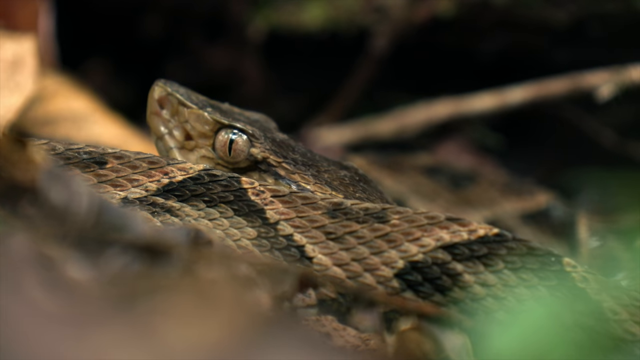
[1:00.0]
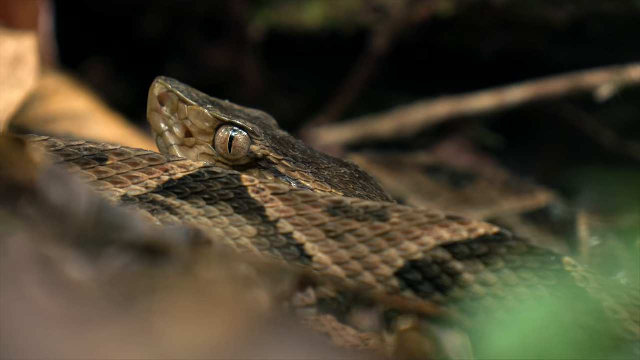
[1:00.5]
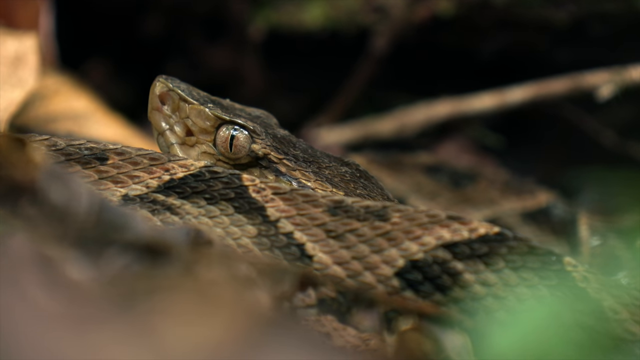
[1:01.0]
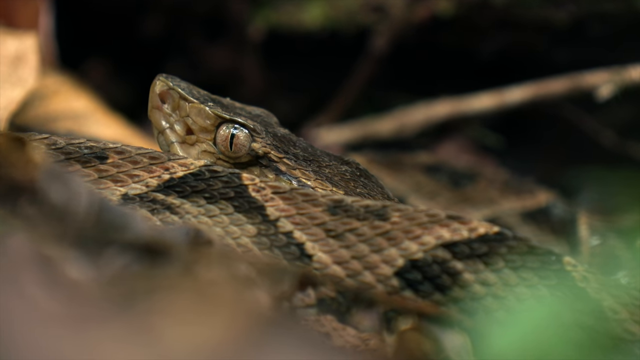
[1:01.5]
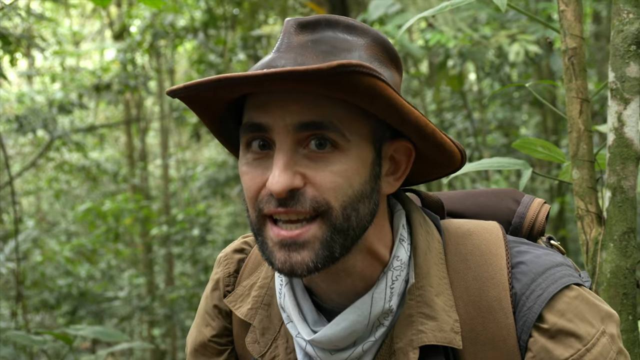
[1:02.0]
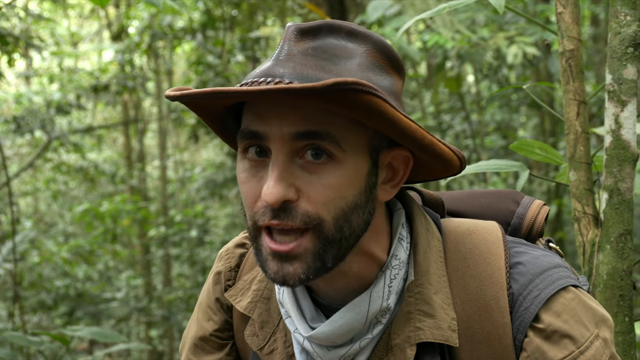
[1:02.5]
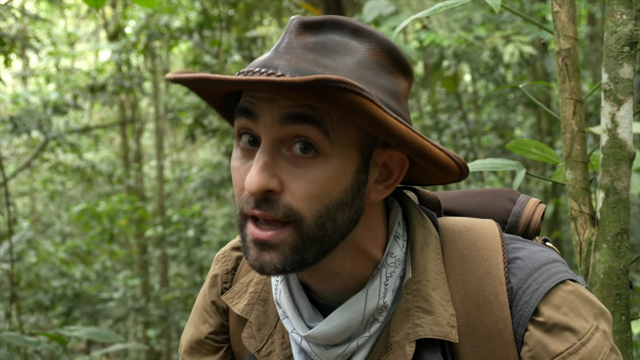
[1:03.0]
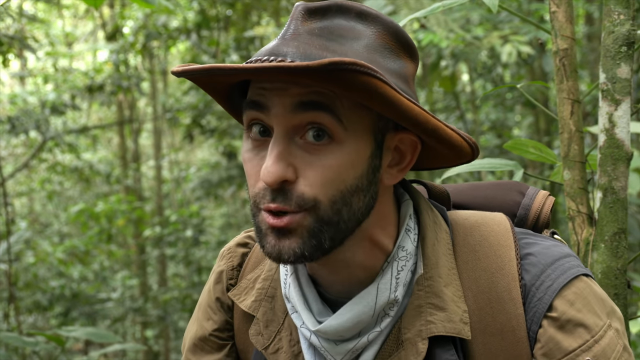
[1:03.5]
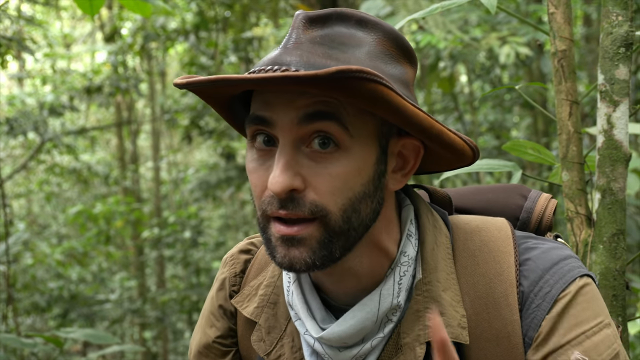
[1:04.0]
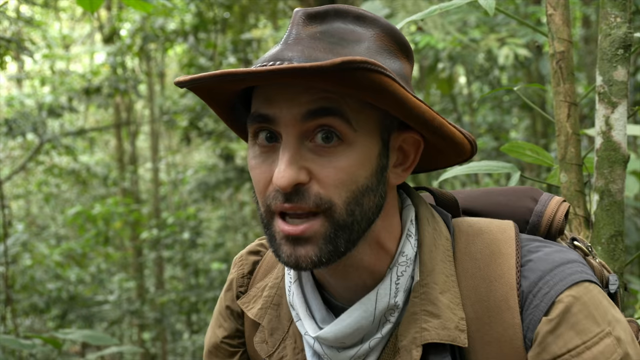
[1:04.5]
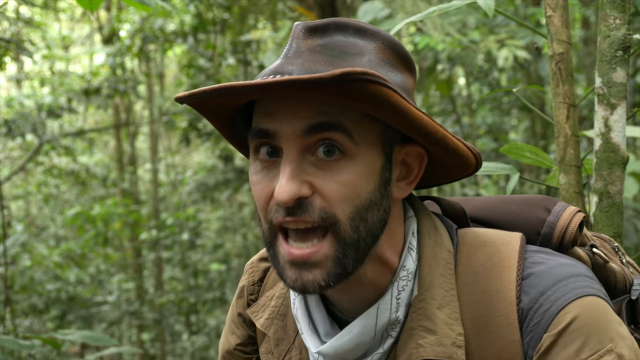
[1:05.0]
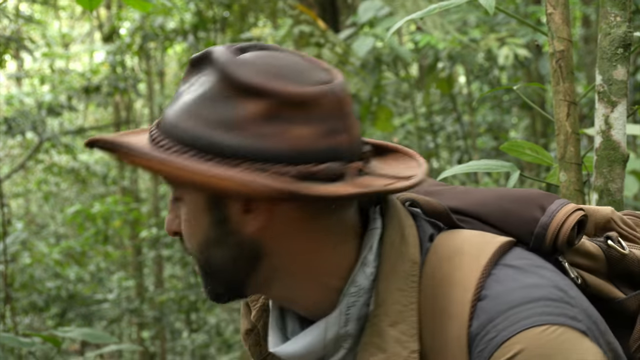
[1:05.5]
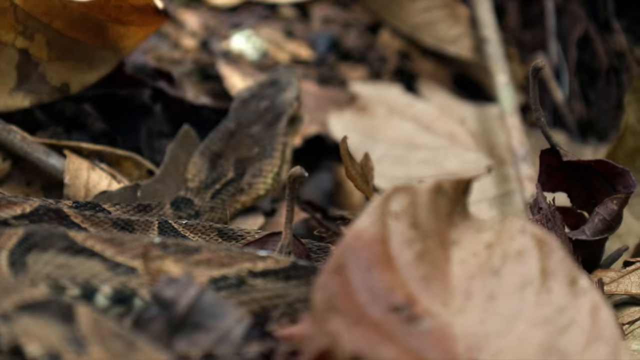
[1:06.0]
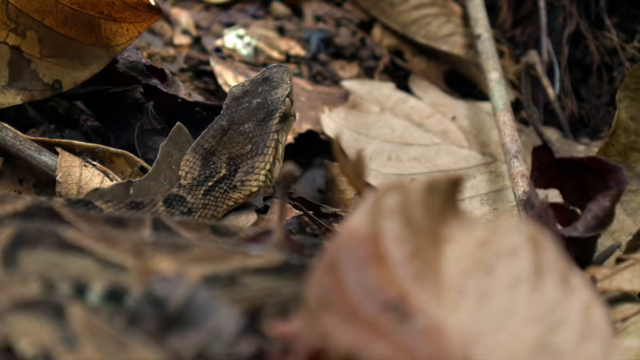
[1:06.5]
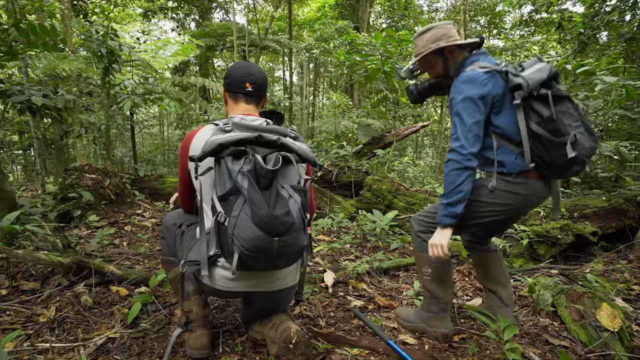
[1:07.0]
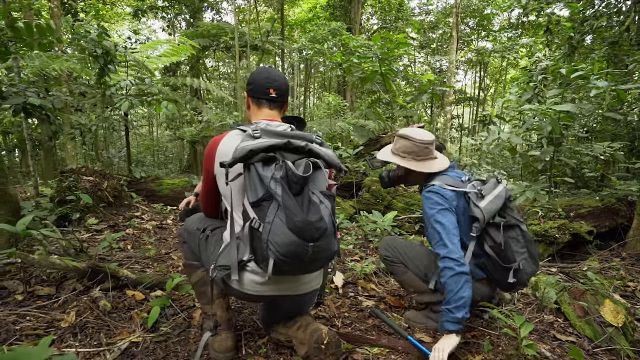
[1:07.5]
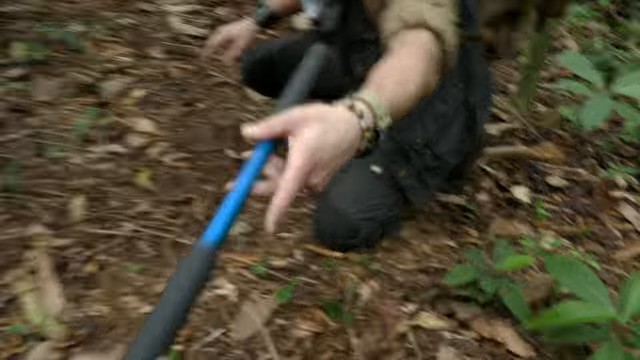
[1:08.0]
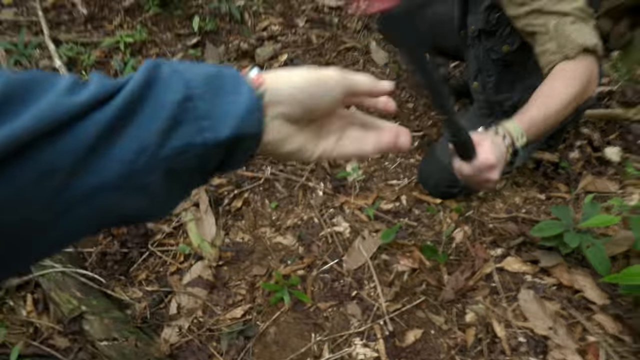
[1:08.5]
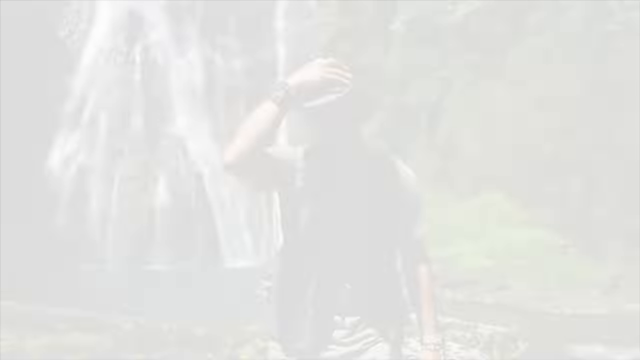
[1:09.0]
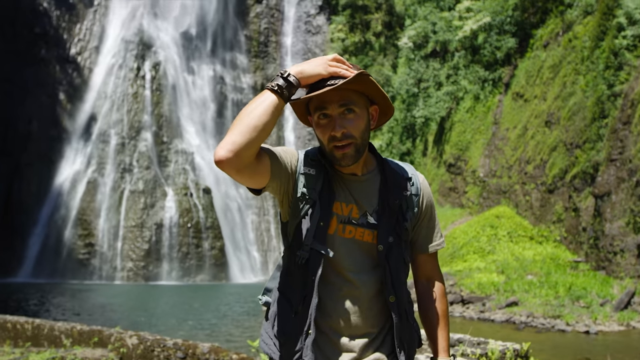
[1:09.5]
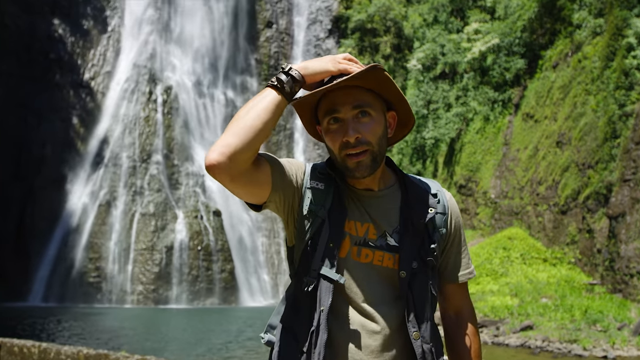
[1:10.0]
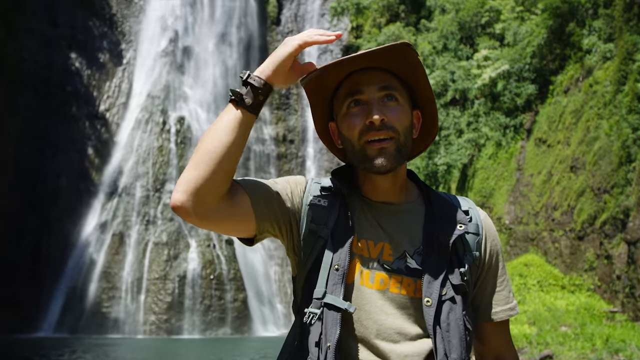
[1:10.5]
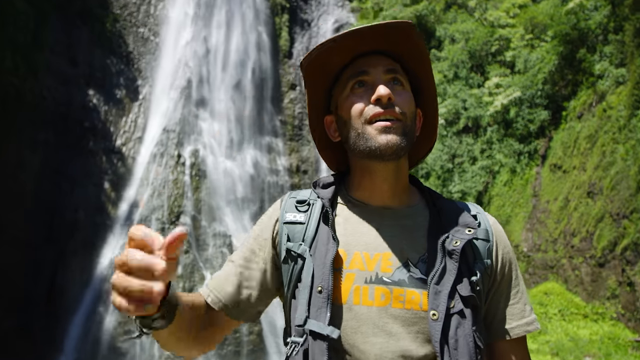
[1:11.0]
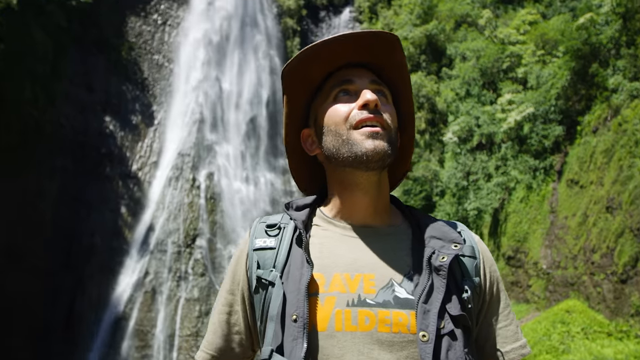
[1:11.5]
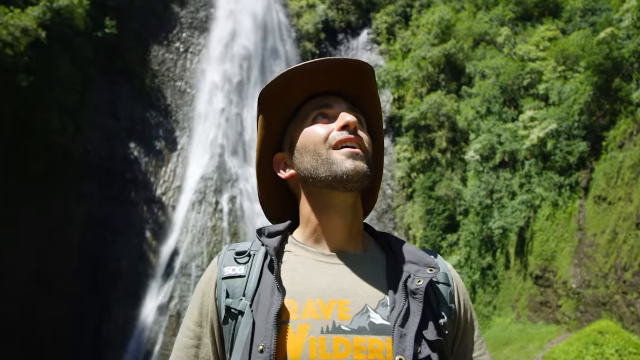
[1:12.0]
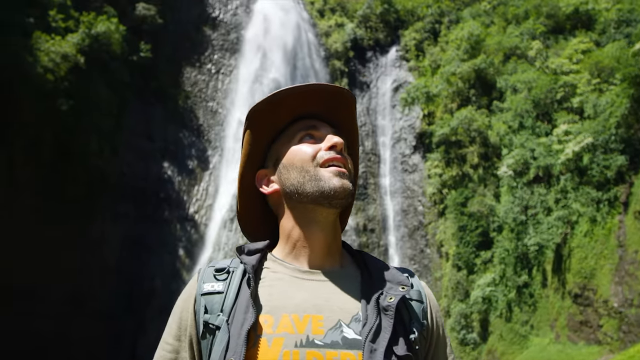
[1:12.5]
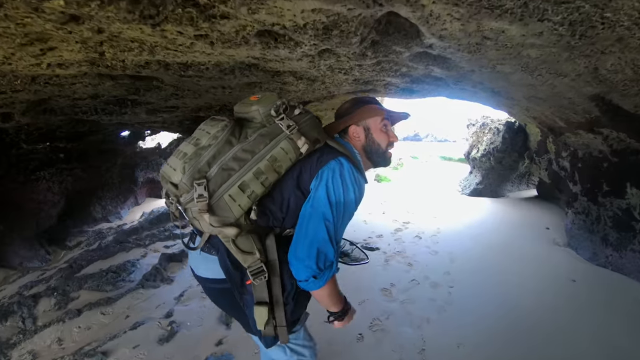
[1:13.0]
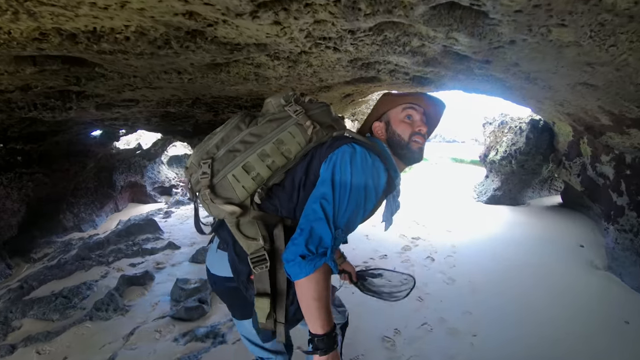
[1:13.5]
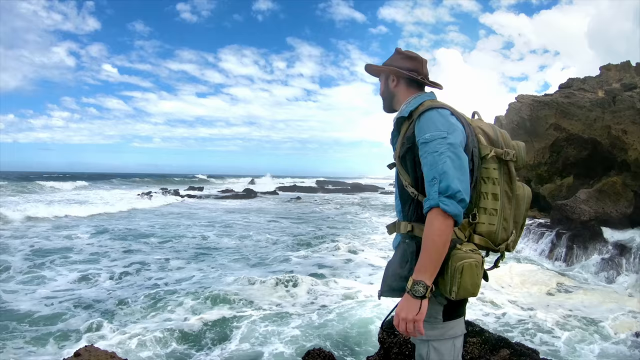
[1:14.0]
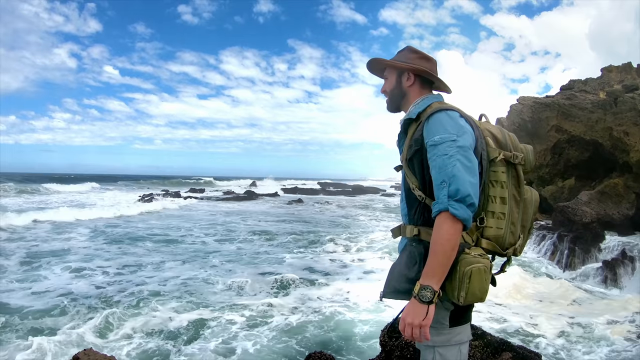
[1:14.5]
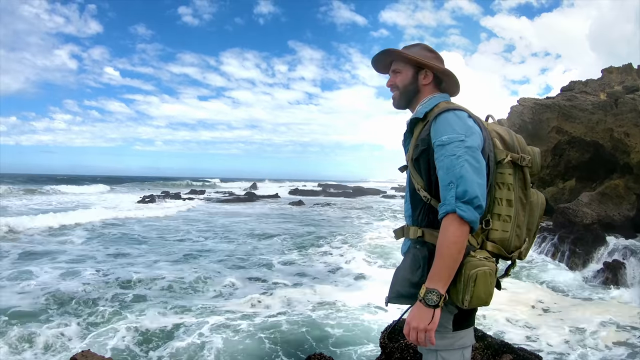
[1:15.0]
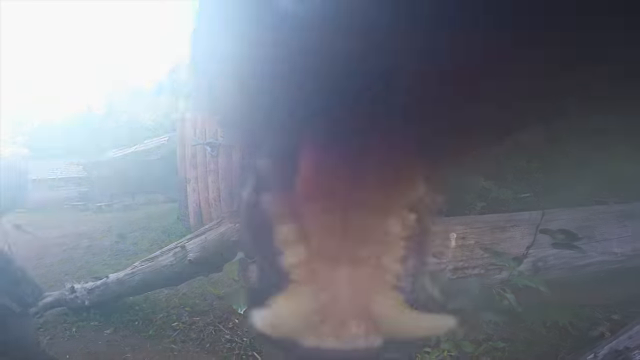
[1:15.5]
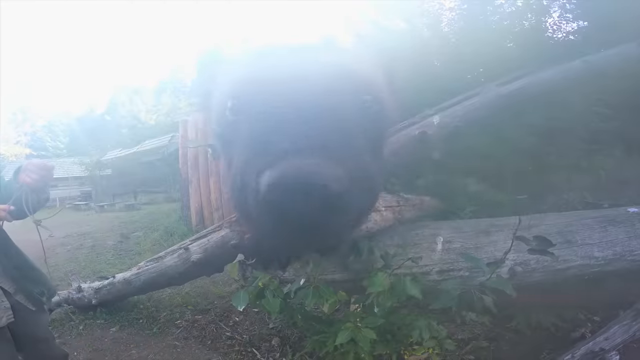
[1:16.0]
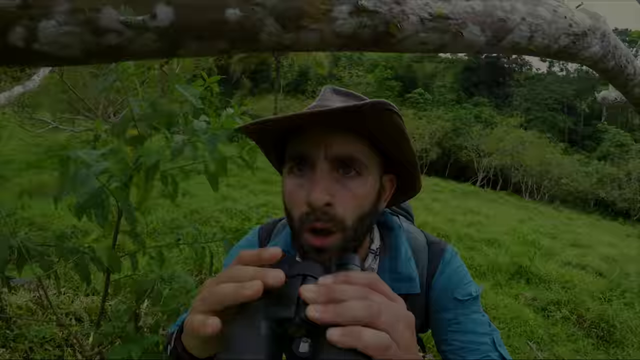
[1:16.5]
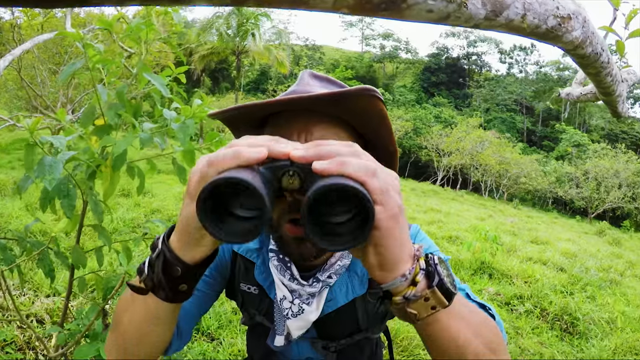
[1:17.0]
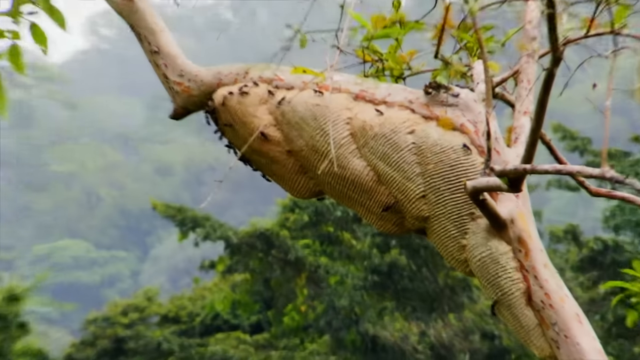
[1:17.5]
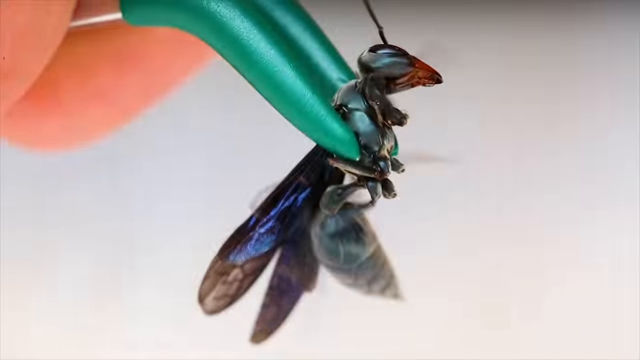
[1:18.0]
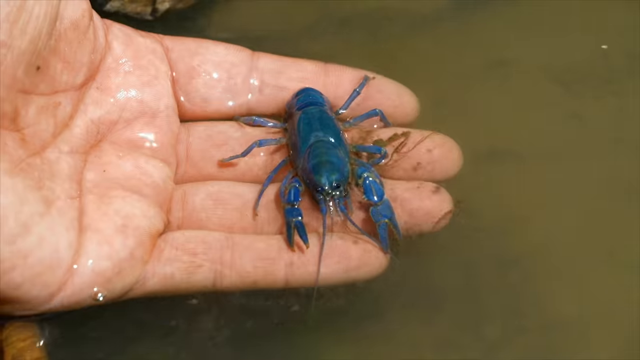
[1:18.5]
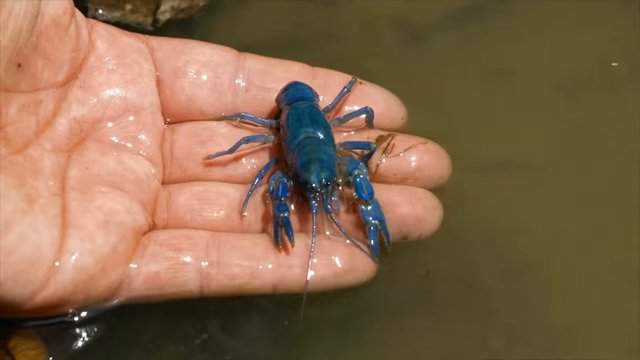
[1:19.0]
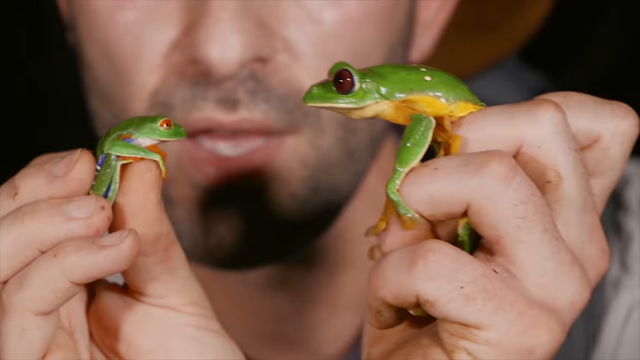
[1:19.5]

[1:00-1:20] A snake hides between some leaves and a log. Then a person appears who might be talking about the snake. The scene changes to this same person looking at other types of animals in other settings; he seems to be the host of some sort of documentary. Part of the filming crew, men with cameras, is also visible. The host is seen standing in different settings: first what seems to be a forest or a jungle, then a beach. He acts surprised, maybe at the animals he is looking at. He stands in front of a waterfall, and stands near a beach holding different types of insects, frogs and some type of bird.